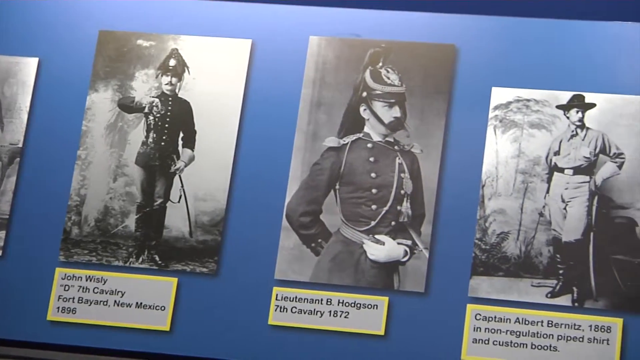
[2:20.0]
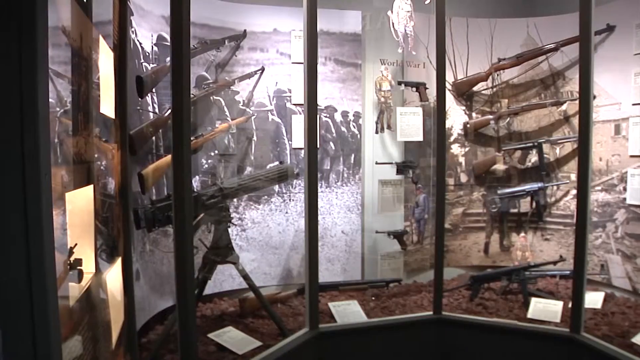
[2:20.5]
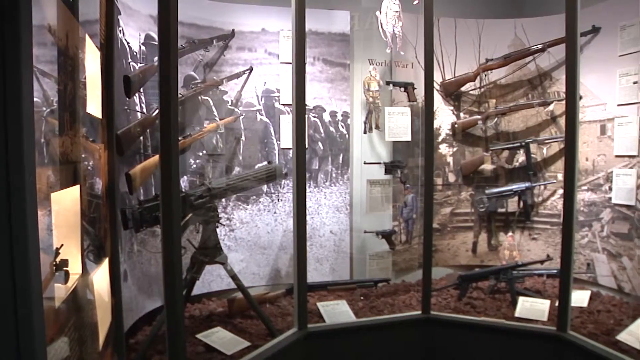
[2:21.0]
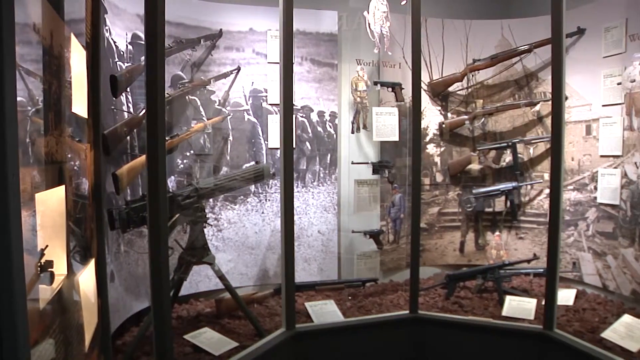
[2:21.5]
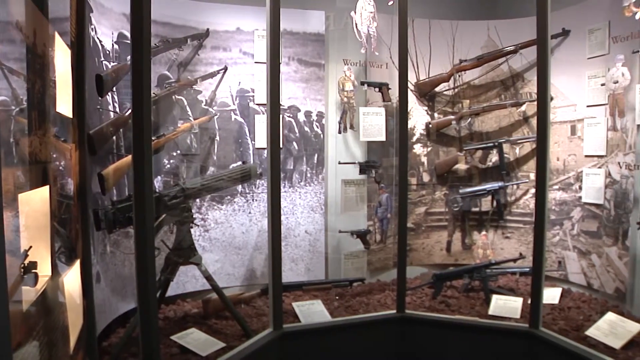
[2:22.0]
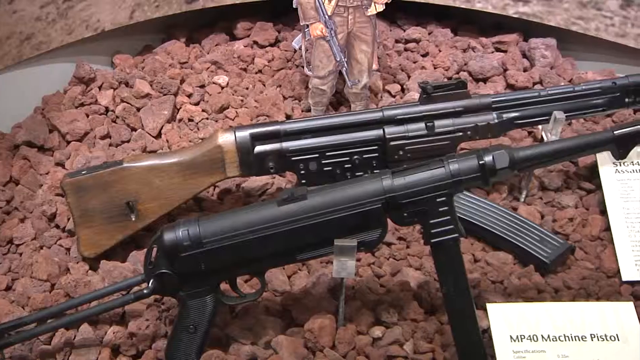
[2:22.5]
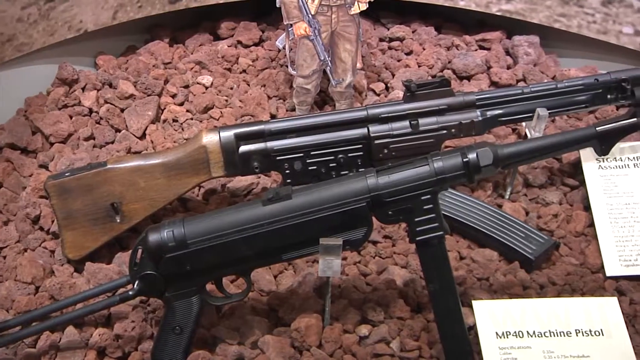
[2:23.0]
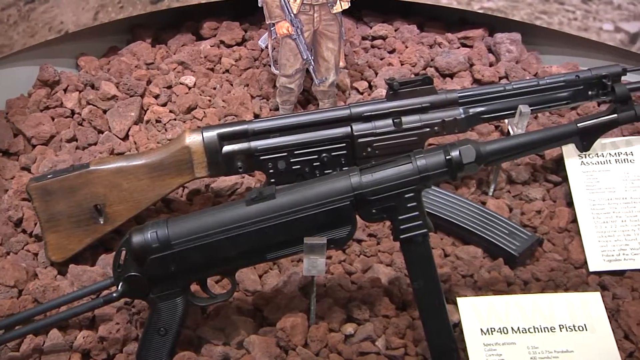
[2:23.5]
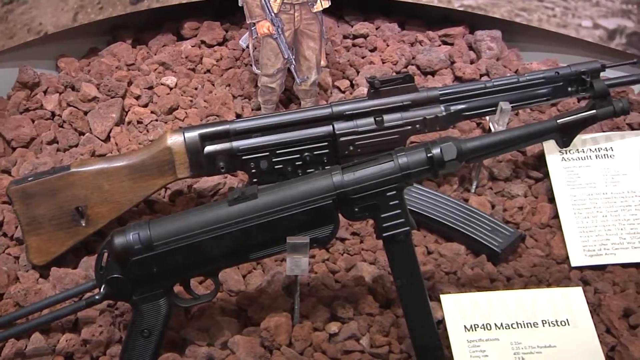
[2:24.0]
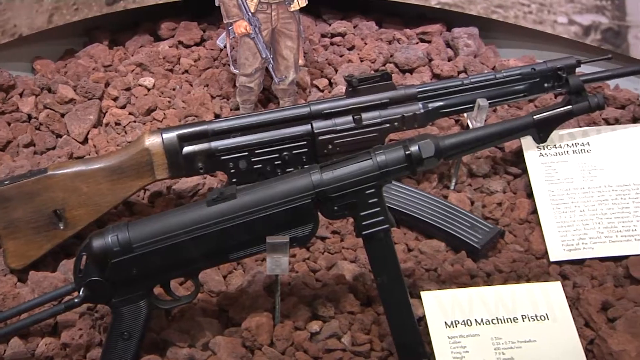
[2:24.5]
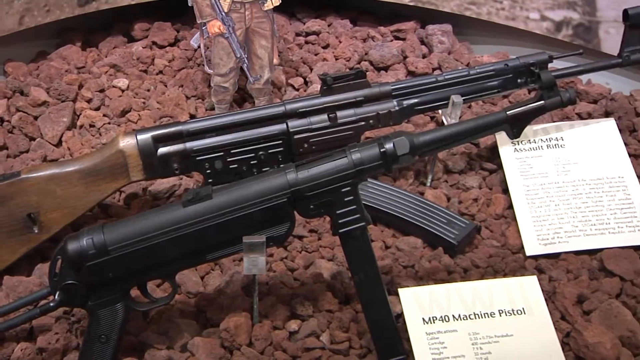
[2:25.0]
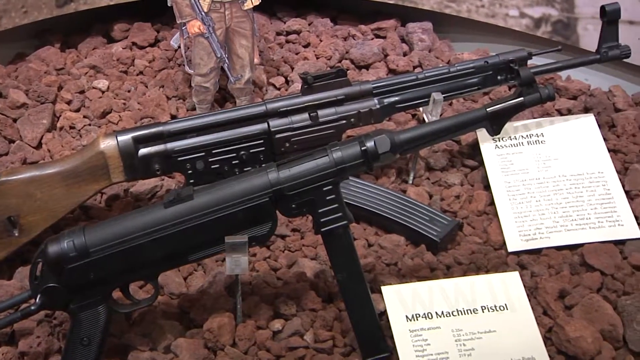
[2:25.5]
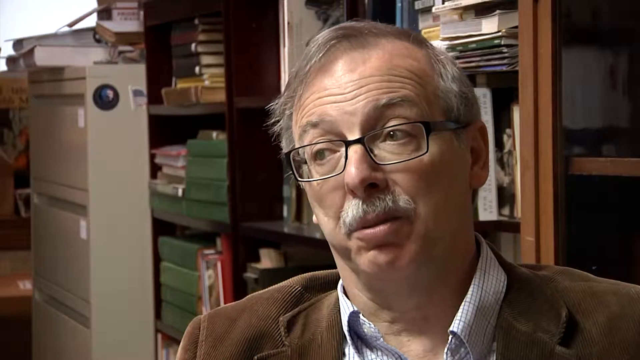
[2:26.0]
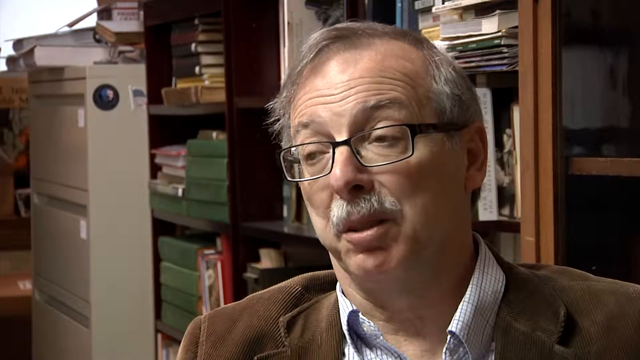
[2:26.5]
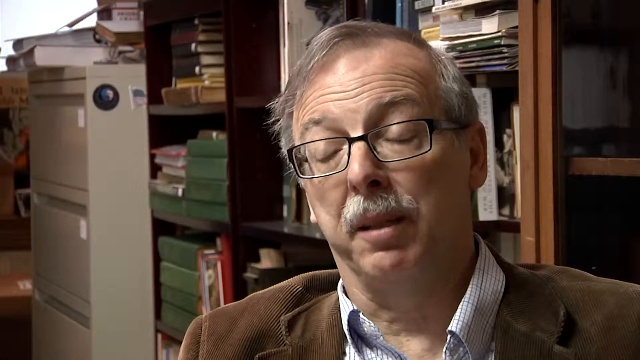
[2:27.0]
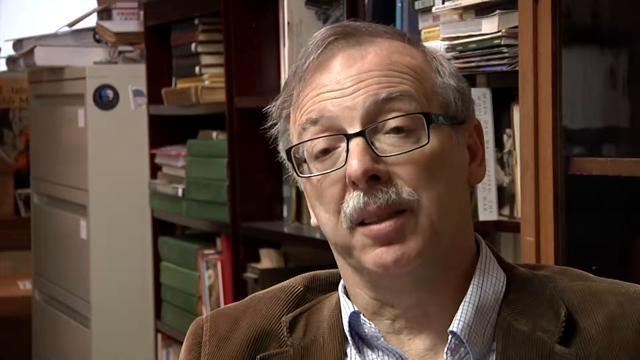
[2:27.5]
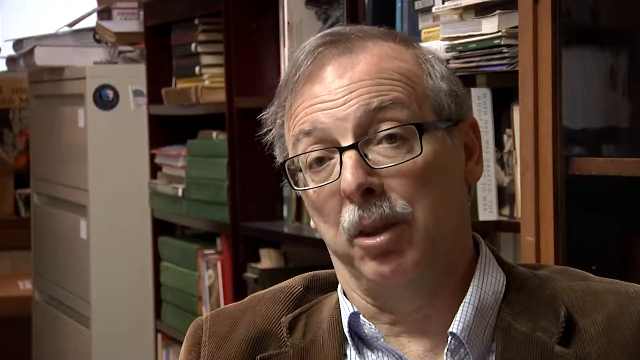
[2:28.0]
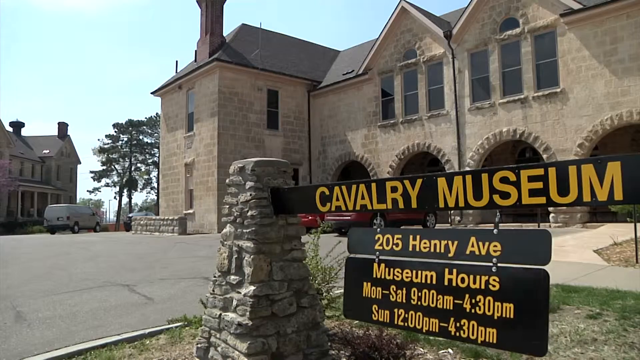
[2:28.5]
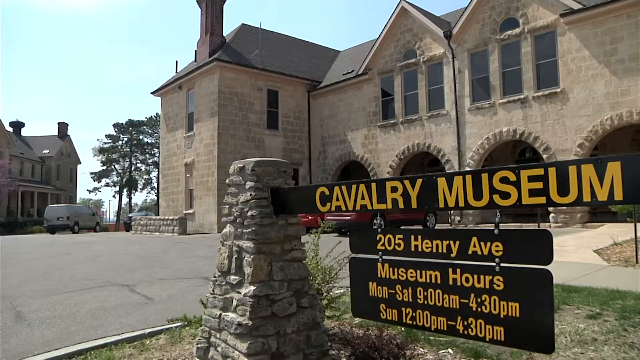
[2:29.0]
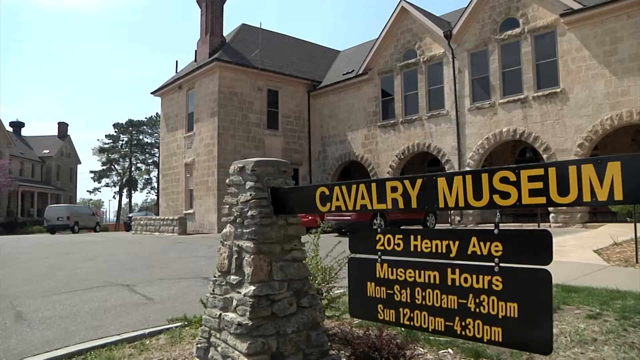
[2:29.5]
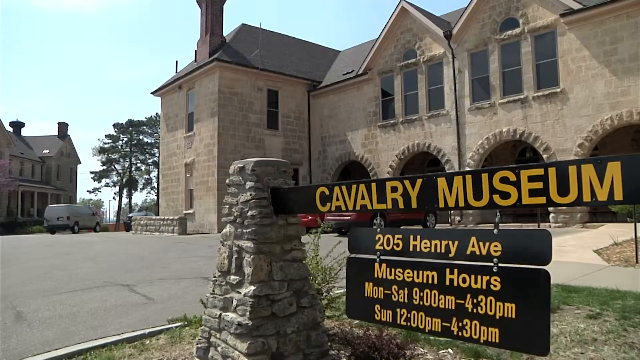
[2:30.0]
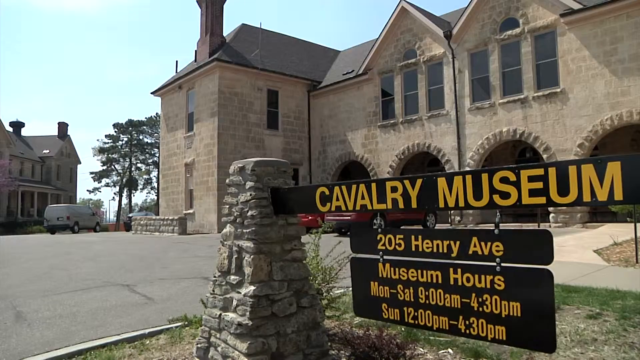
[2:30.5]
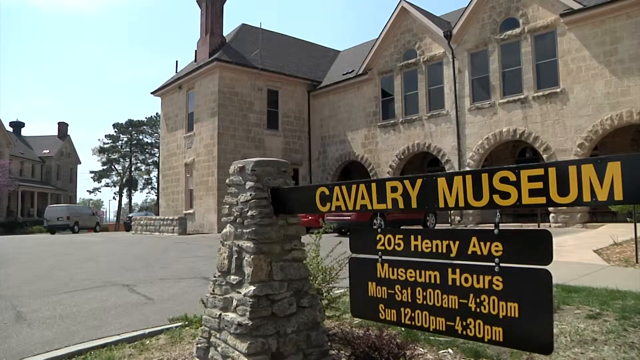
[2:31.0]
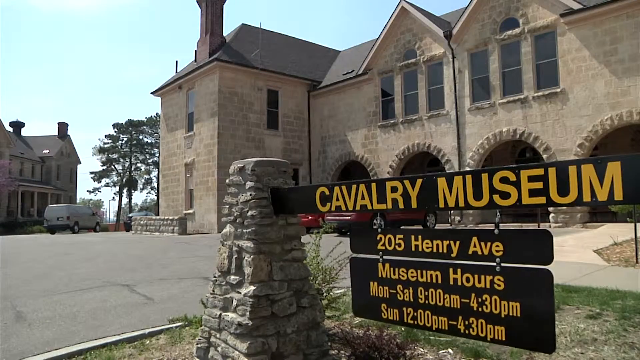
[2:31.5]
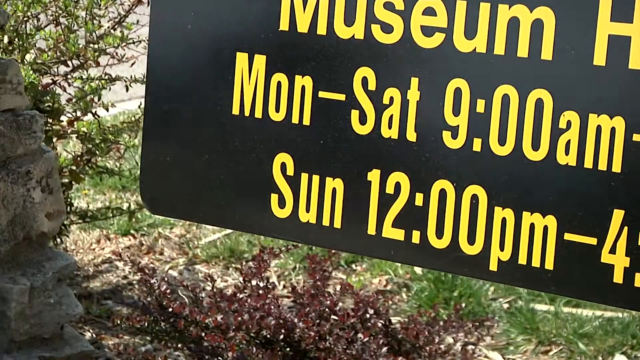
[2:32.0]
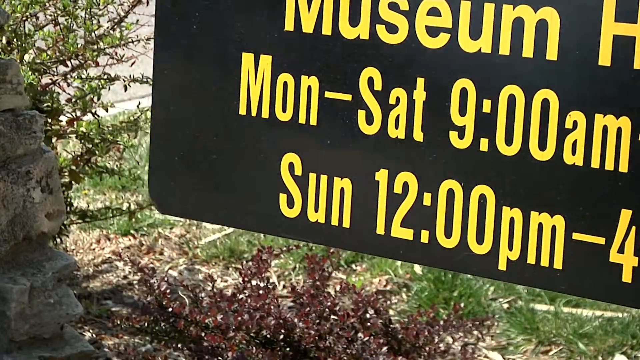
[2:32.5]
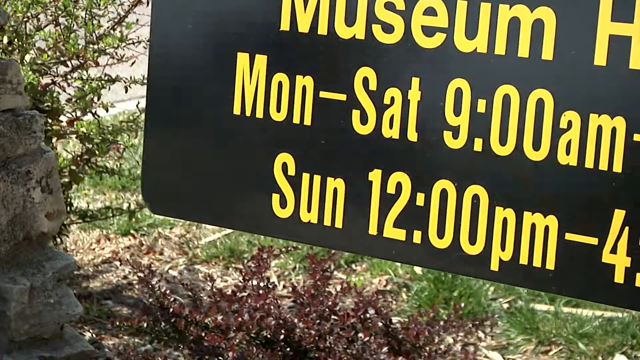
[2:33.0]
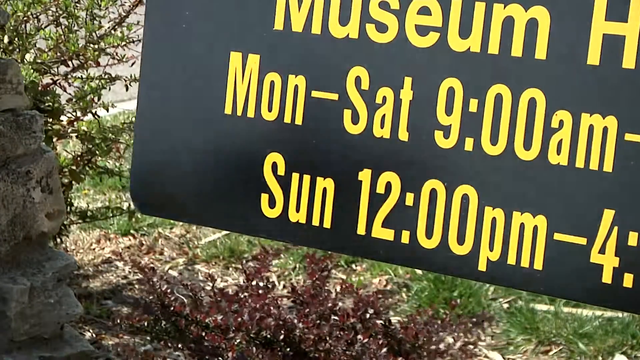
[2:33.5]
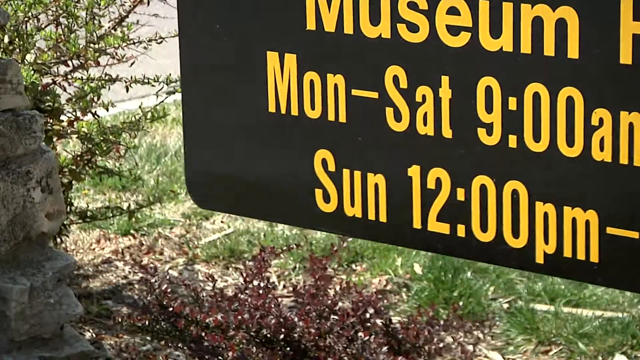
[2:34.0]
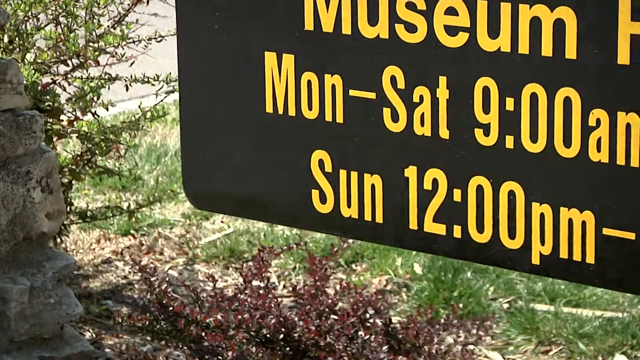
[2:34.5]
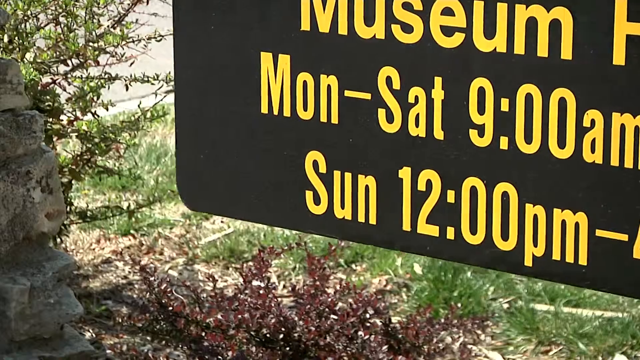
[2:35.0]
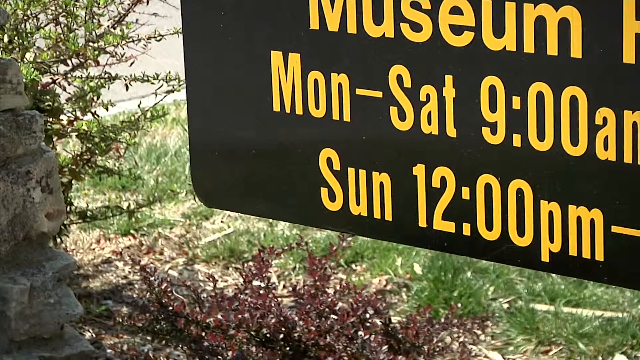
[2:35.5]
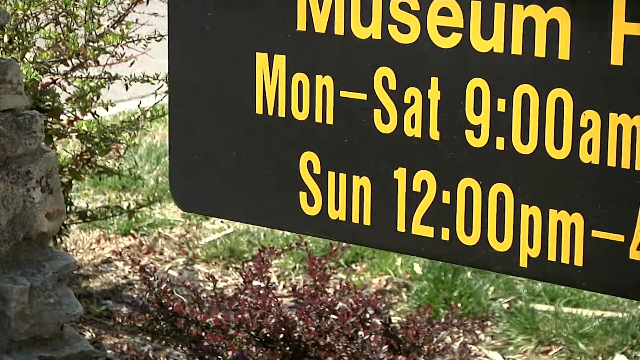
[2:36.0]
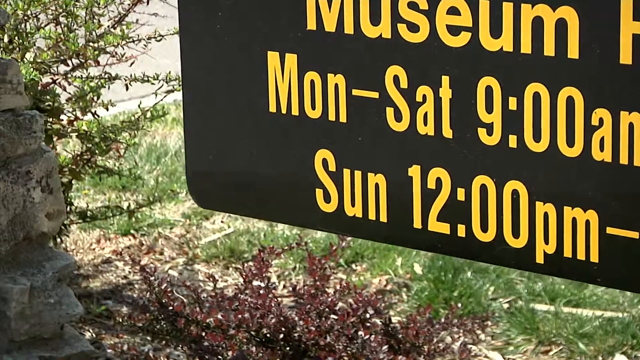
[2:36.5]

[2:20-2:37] Portraits of different soldiers are shown. The one on the left is titled "John Whistley D, 7th Cavalry, Fort Bayard, New Mexico"; he wears a hat with feathers coming down off it, probably from the 1890s. The one in the middle says "Lieutenant B. Hodgson, 7th Cavalry, 1872"; he wears a Kaiser-style hat with a chin strap and holds his belt with his left hand in a white glove. The man on the right wears what is probably an outfit from just after World War I: boots, a long-sleeved button-down shirt, chino-like pants and a black hat. A different part of the museum has a whole lot of rifles attached to the wall. On the left is a big photo of World War I soldiers marching; the bottom gun is a machine gun with rifles above it. On the right-hand side, a different kind of machine gun is on the ground with different rifles, probably from a different war. The man from the museum then talks.